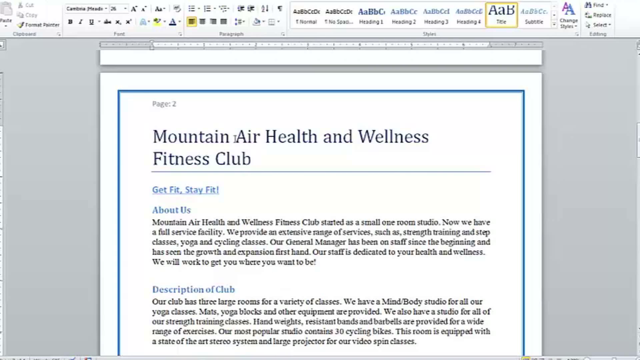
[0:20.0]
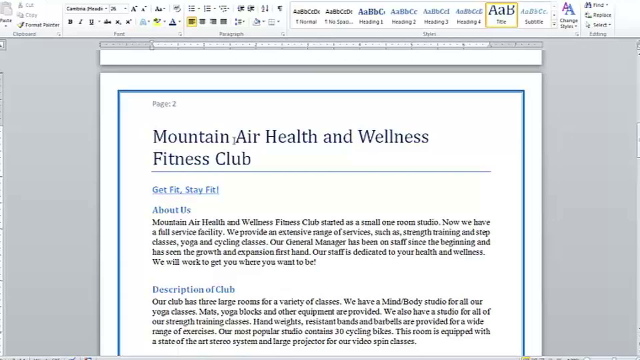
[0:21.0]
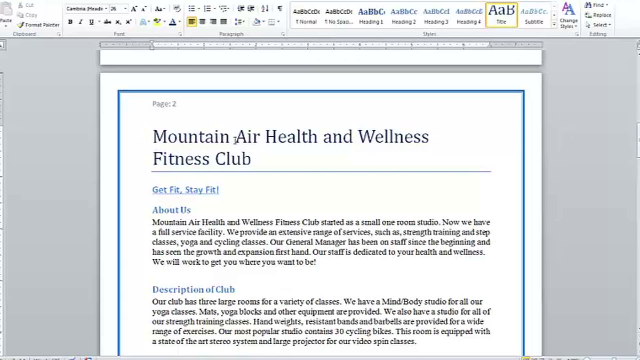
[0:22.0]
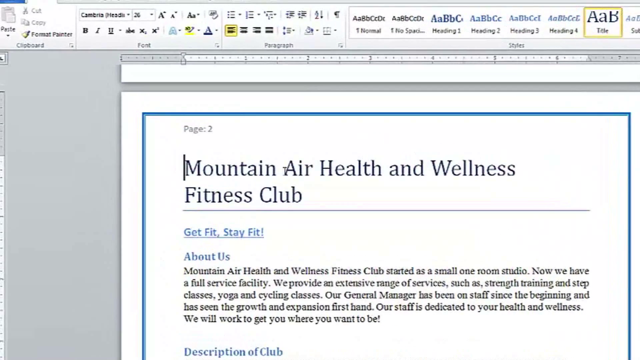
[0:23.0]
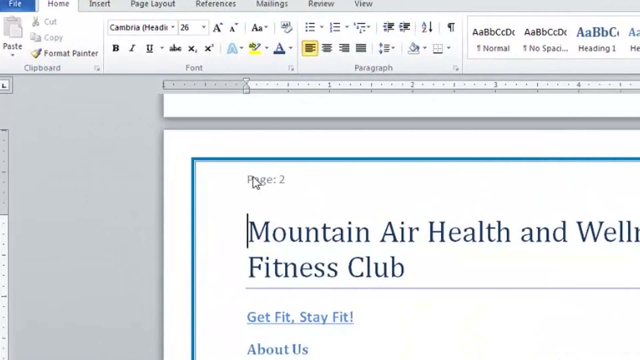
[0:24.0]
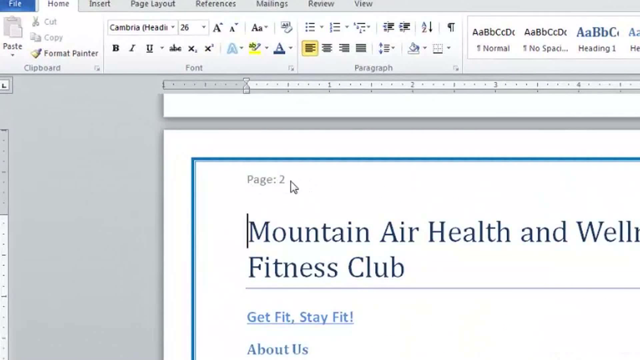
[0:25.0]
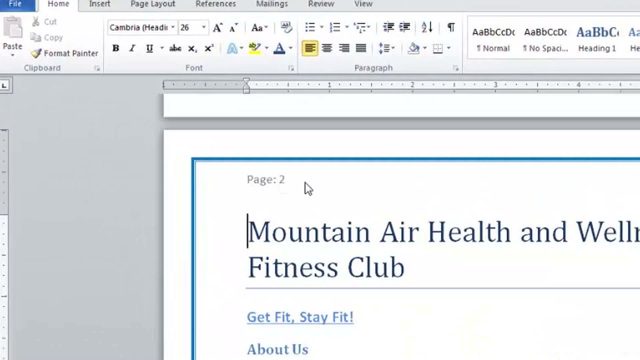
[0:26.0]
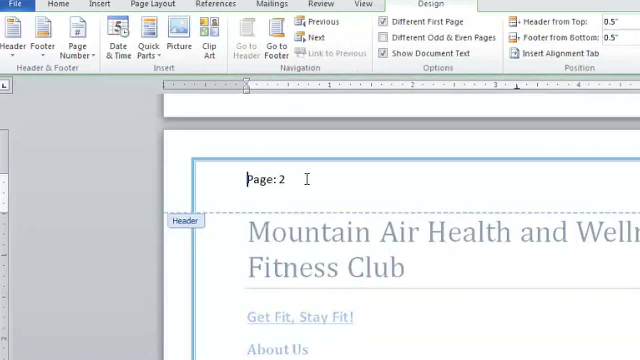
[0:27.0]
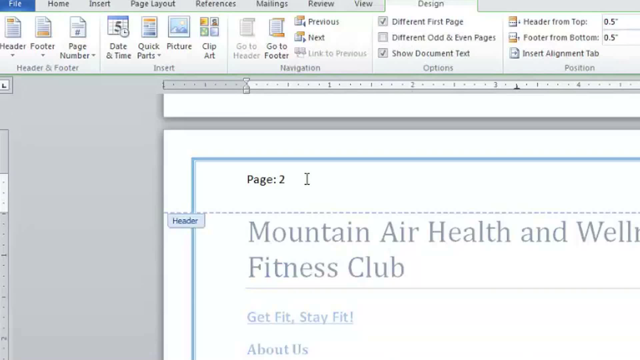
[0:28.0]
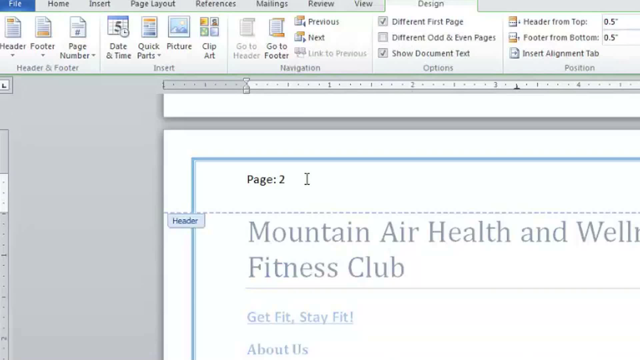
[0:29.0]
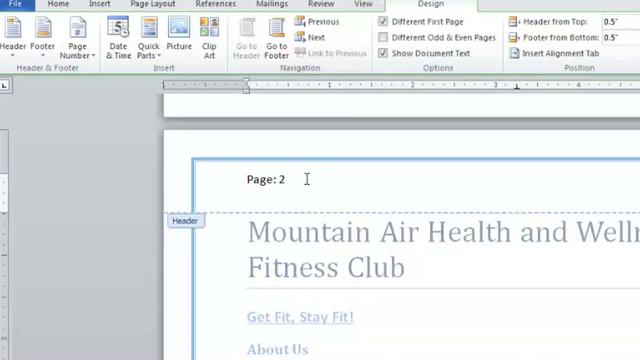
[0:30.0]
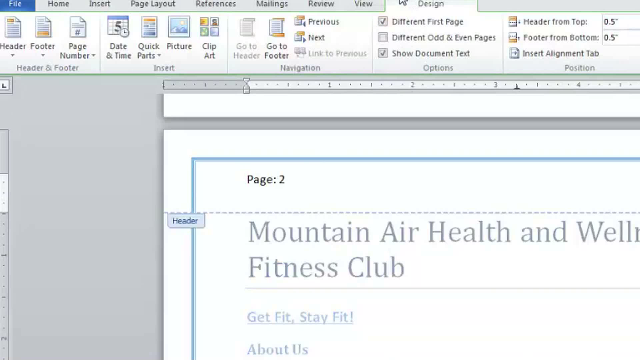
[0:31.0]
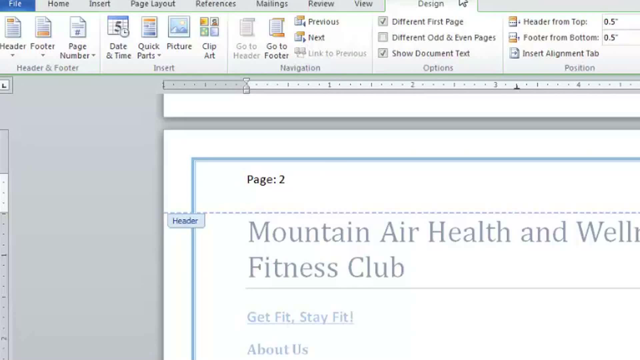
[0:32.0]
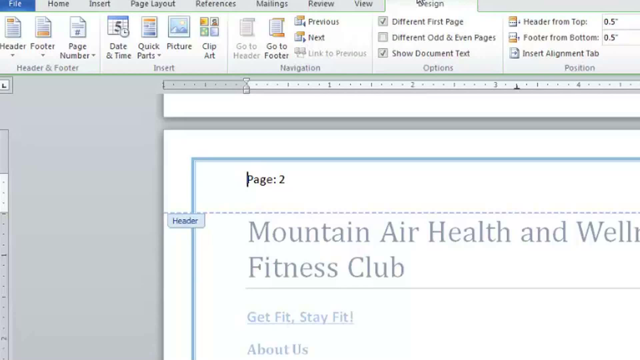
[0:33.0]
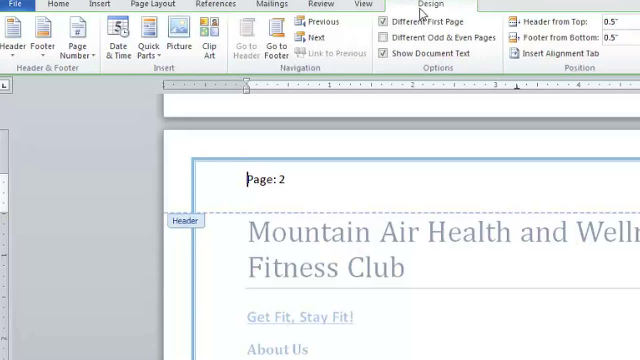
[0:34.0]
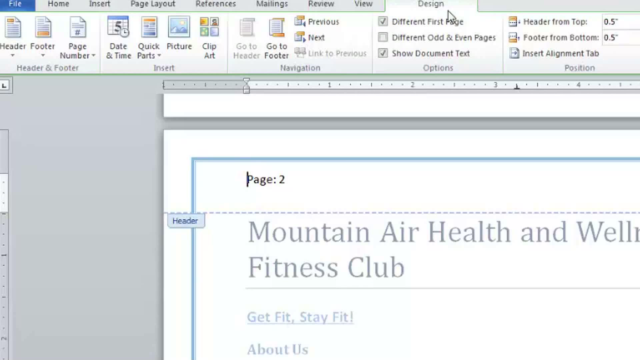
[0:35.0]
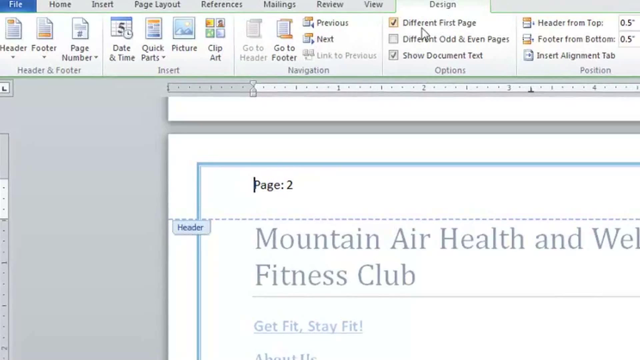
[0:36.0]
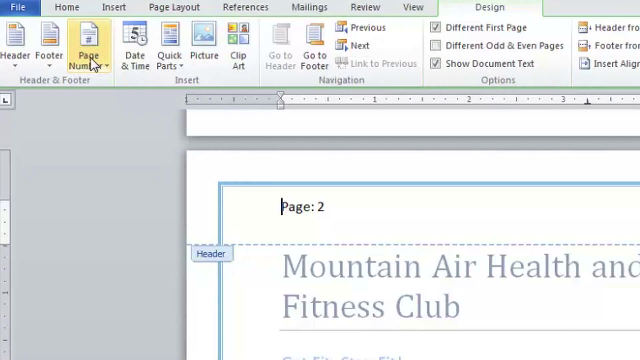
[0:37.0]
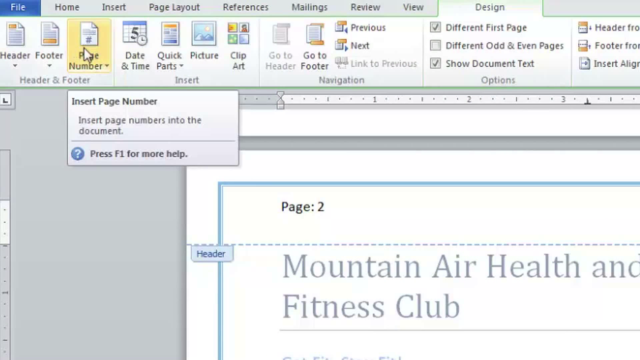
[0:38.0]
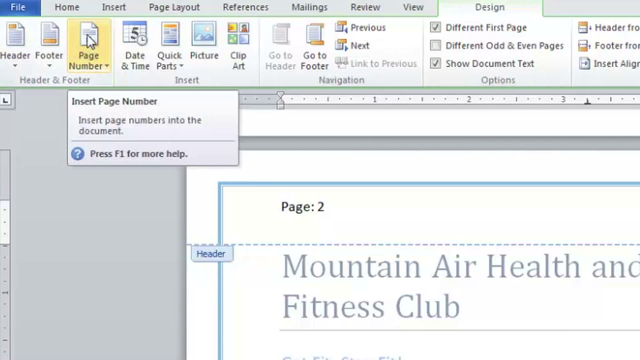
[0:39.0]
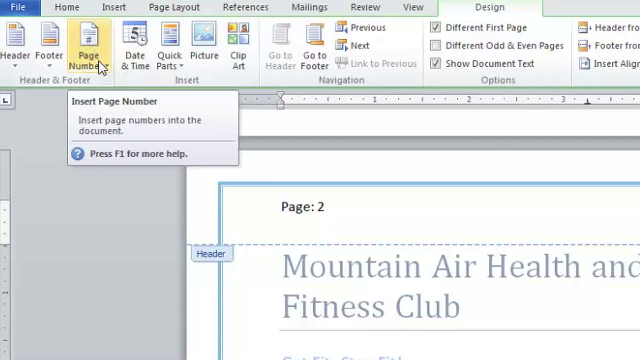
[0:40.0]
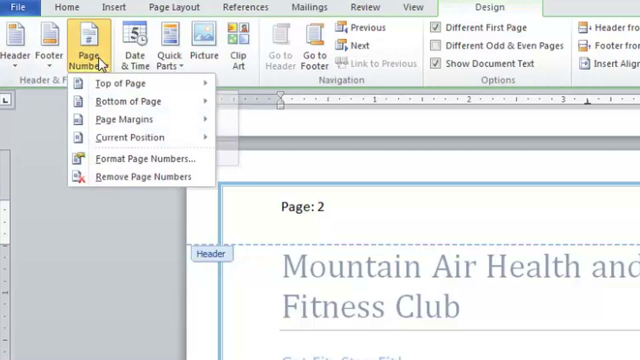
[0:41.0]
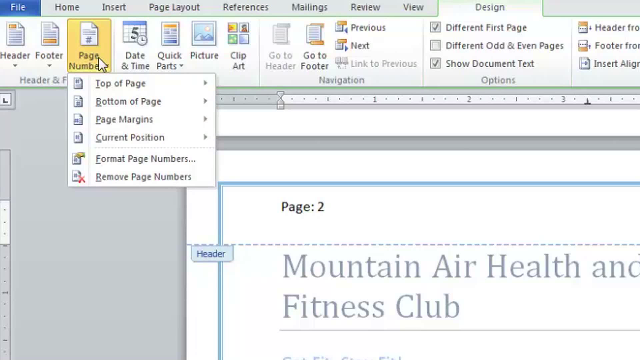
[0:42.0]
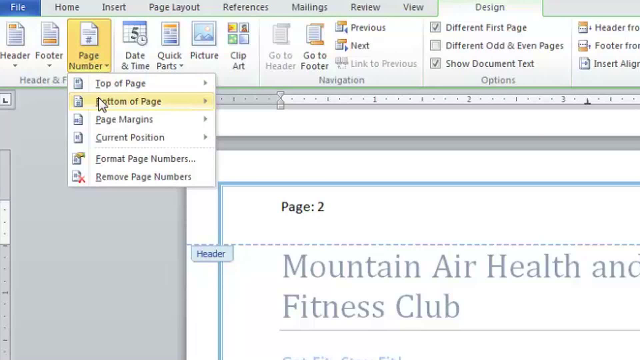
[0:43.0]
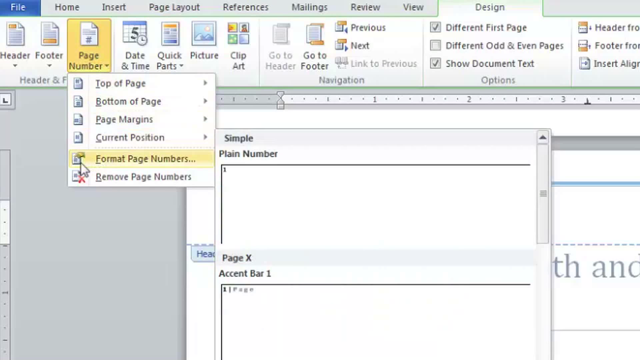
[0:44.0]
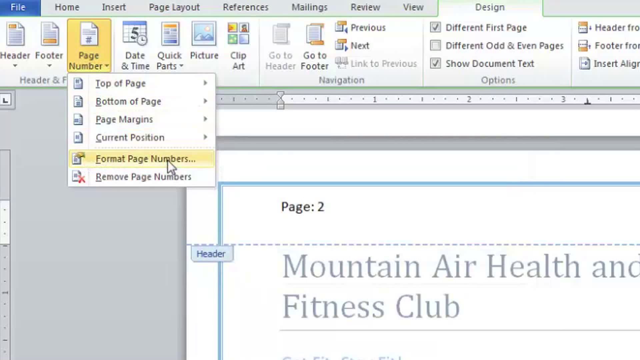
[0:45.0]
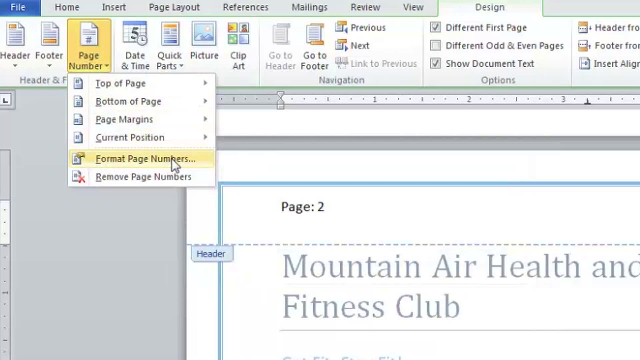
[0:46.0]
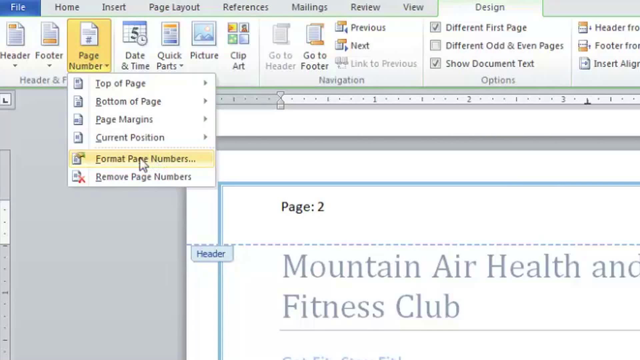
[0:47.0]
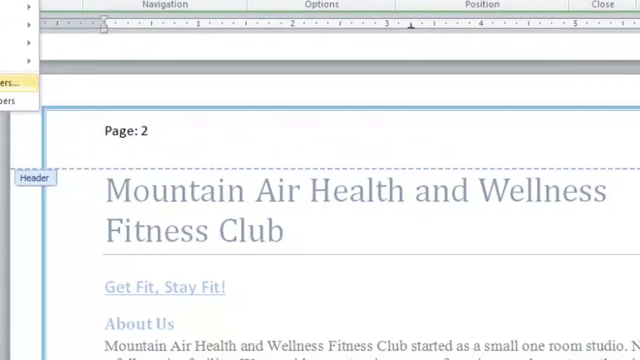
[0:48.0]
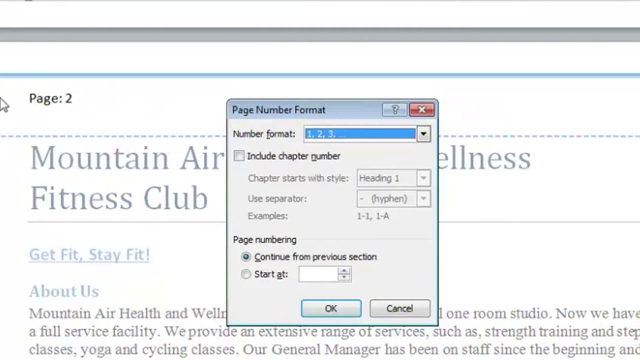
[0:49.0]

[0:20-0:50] A document is shown, opened in a web browser in a Word program. The top of the document shows that this is page 2, titled "Mountain Air Health and Wellness Fitness Club." Underneath it says "Get Fit, Stay Fit," the first paragraph is titled "About Us," and the next part is titled "Description of Club." The video zooms in on page 2, and the mouse cursor moves over the page 2 section; then a text cursor flashes right next to "page 2." The mouse pointer moves around at the top of the page, eventually clicks the Page Number button, and then moves down, showing how to edit the page numbers in the document.